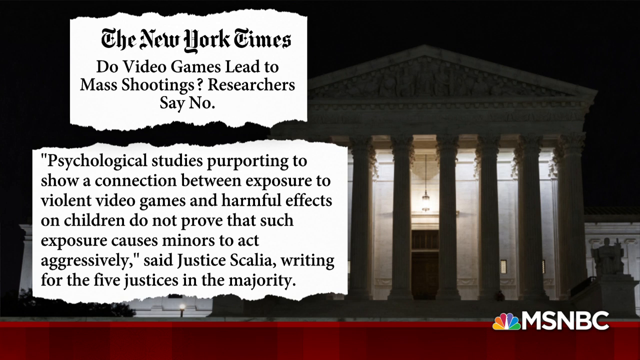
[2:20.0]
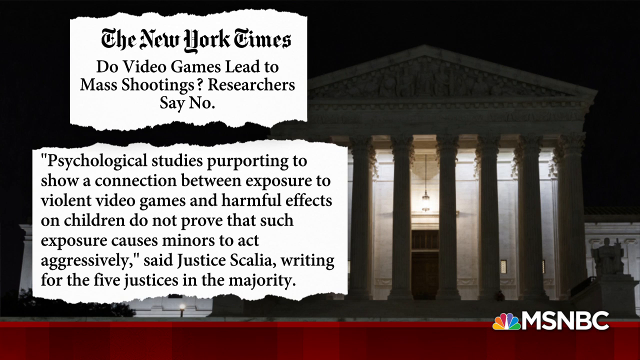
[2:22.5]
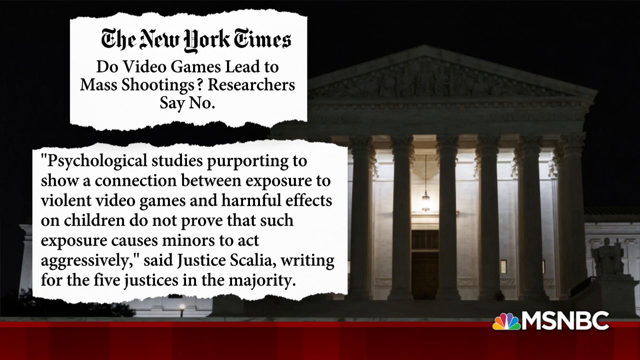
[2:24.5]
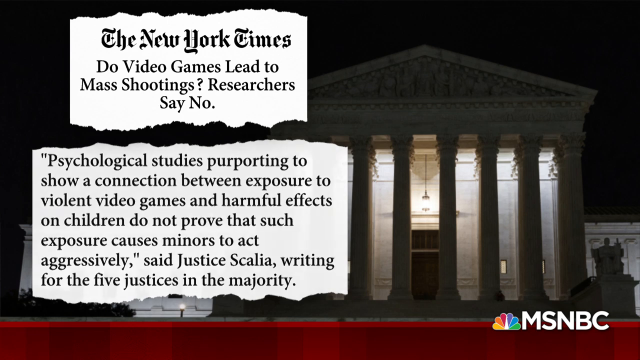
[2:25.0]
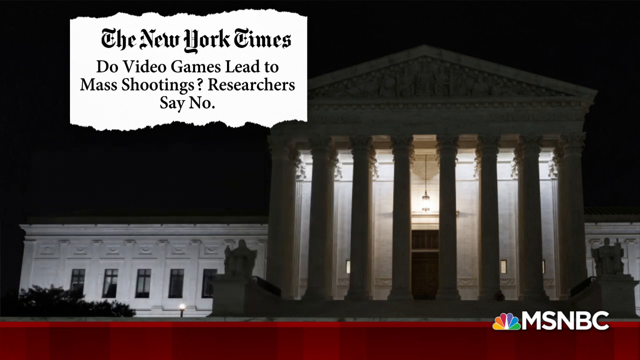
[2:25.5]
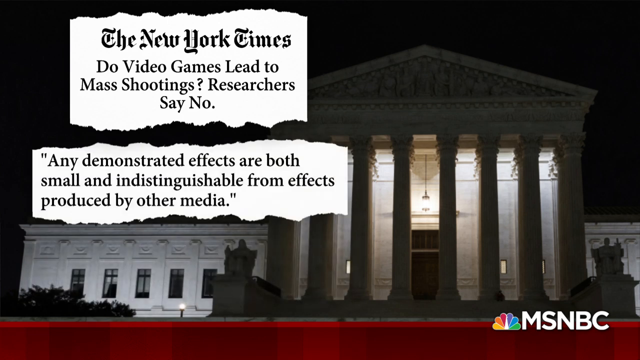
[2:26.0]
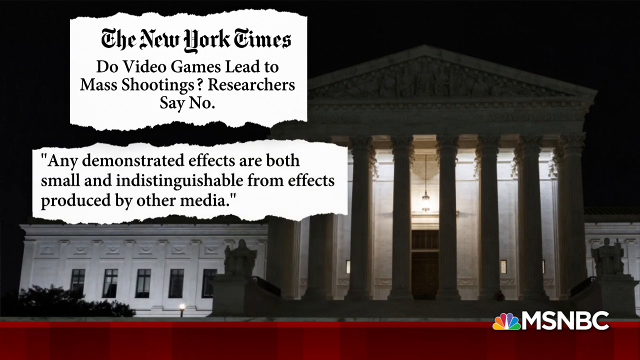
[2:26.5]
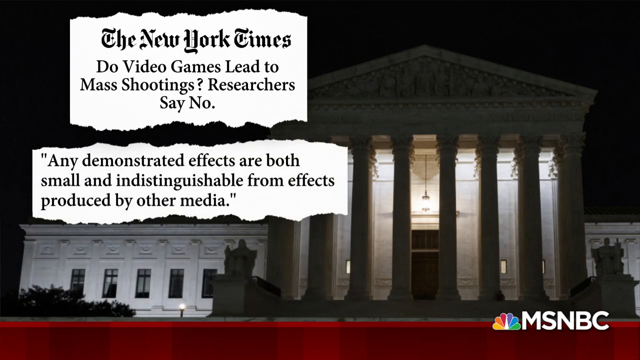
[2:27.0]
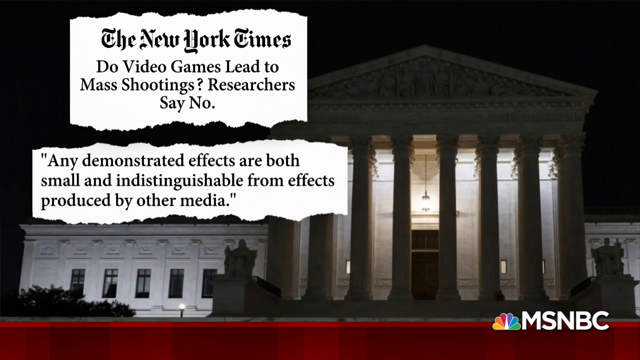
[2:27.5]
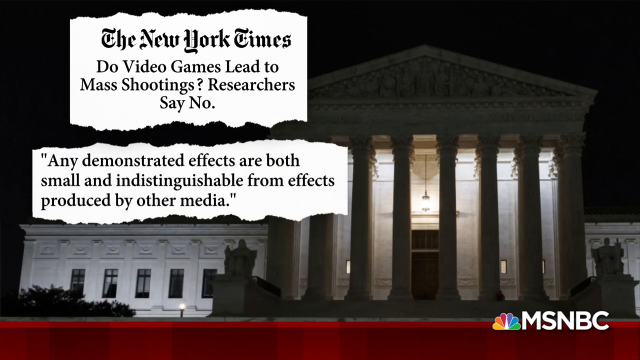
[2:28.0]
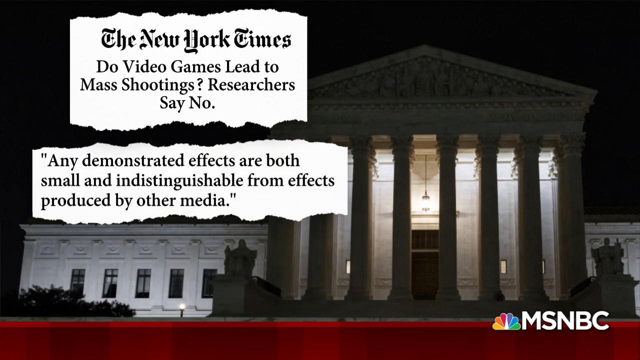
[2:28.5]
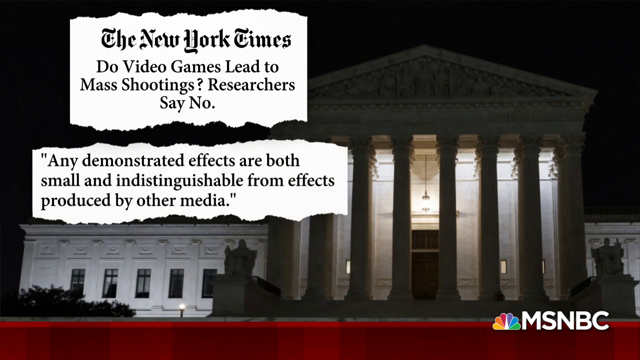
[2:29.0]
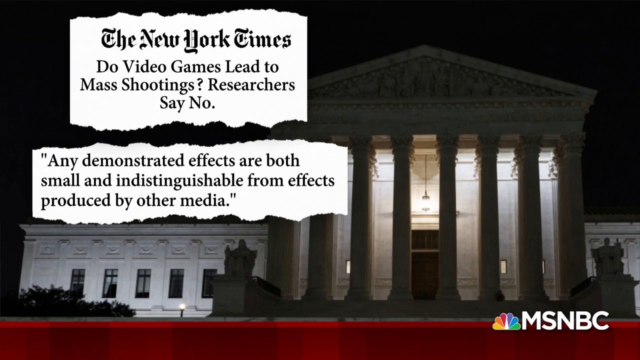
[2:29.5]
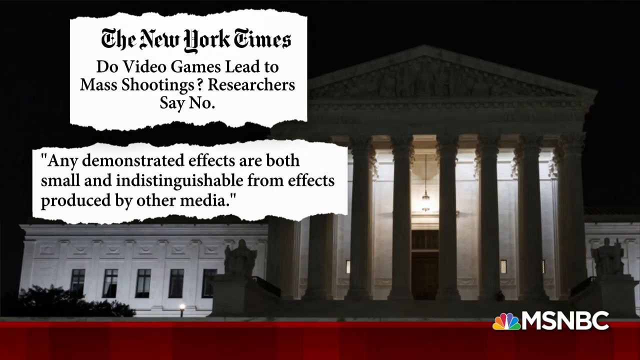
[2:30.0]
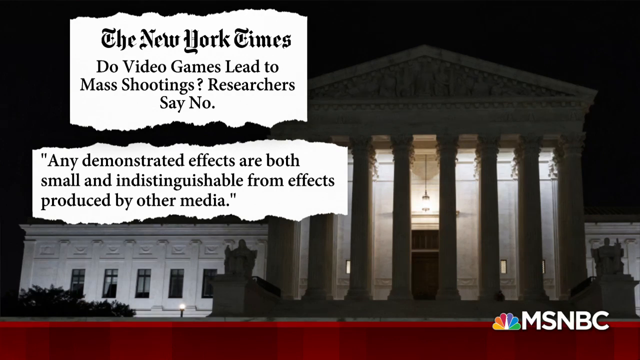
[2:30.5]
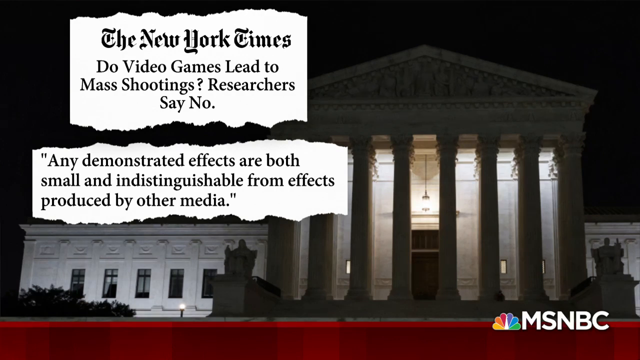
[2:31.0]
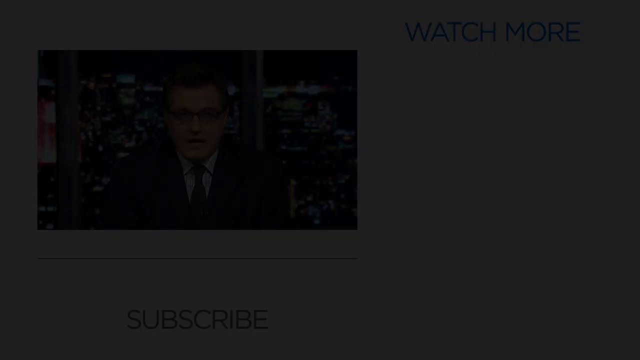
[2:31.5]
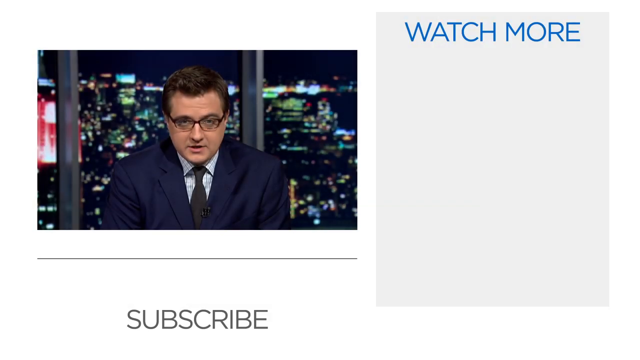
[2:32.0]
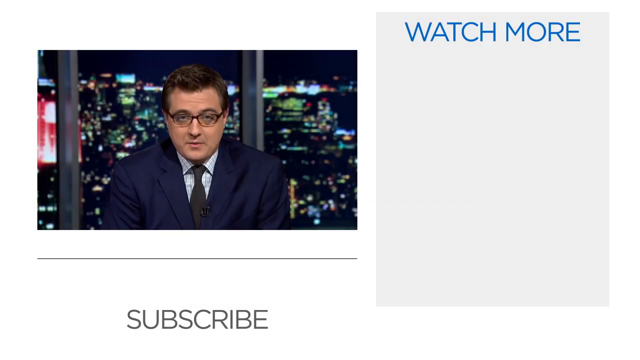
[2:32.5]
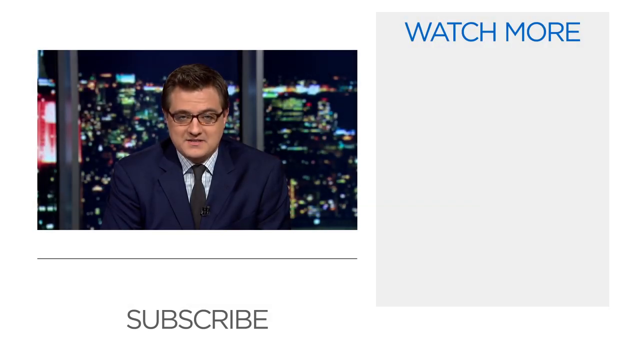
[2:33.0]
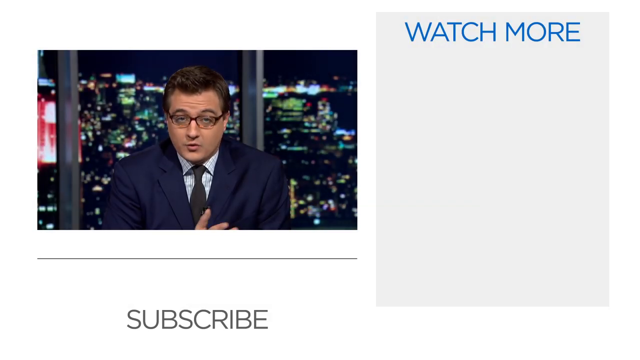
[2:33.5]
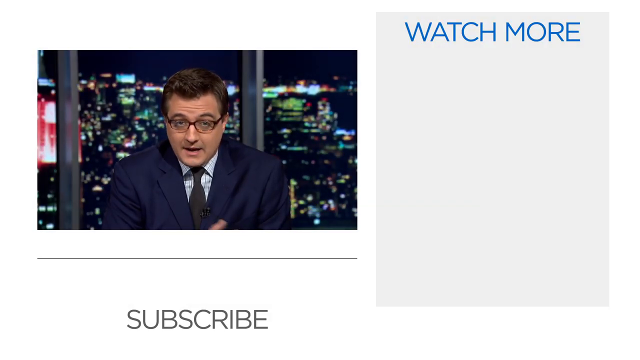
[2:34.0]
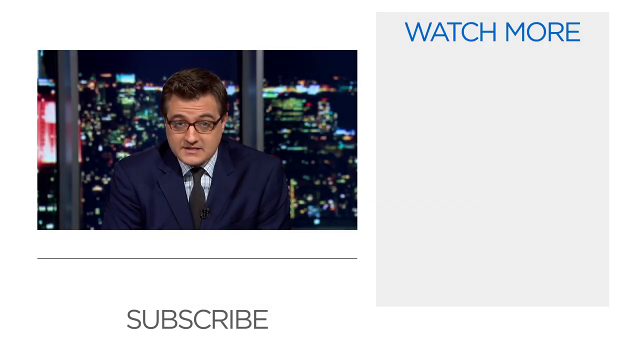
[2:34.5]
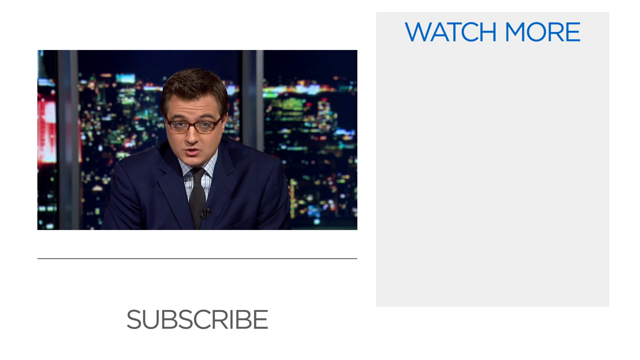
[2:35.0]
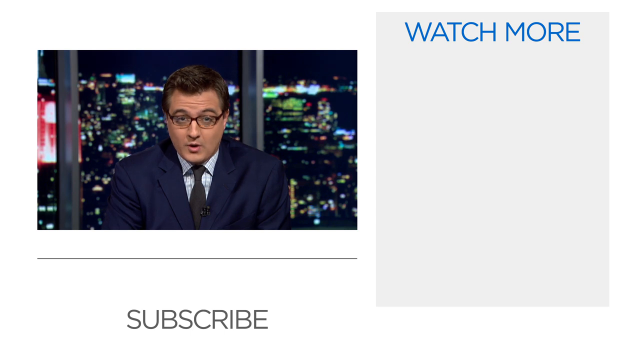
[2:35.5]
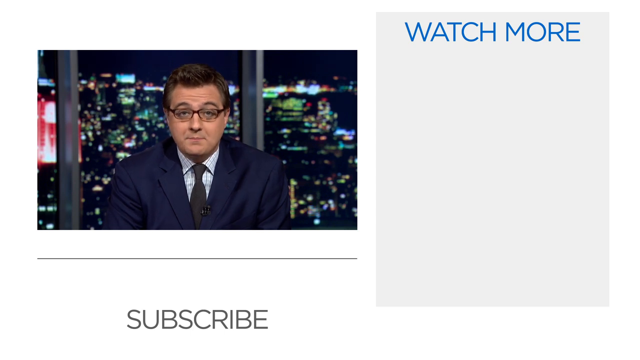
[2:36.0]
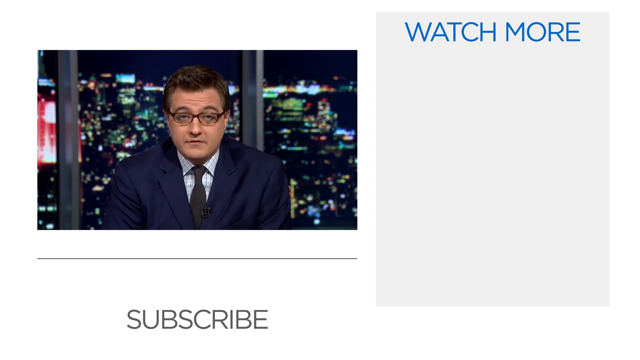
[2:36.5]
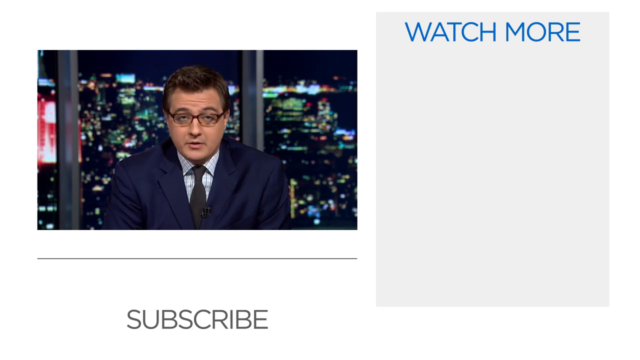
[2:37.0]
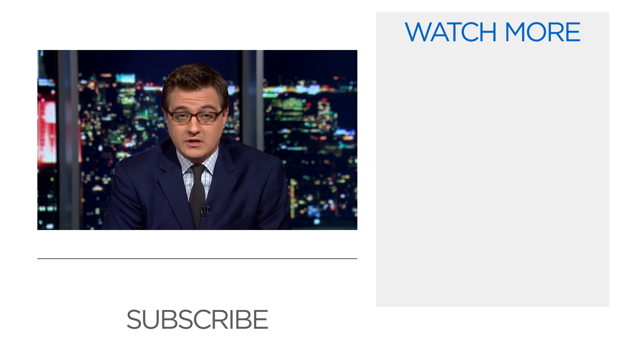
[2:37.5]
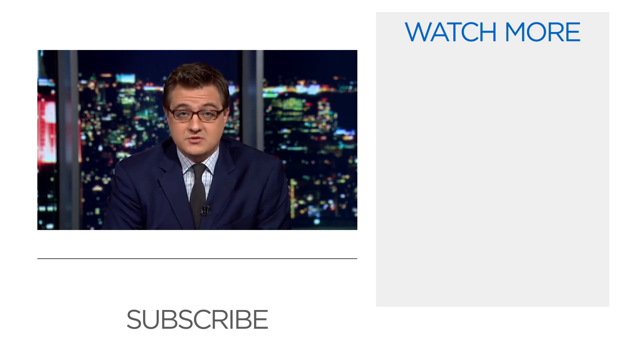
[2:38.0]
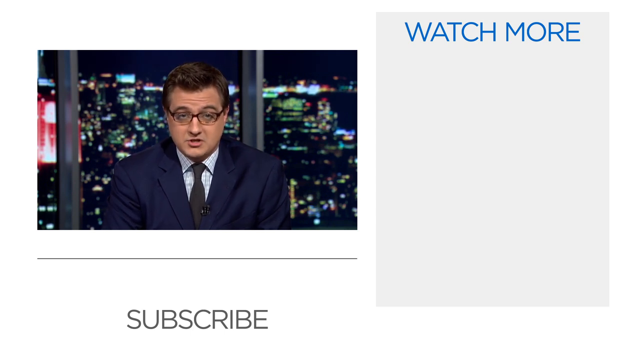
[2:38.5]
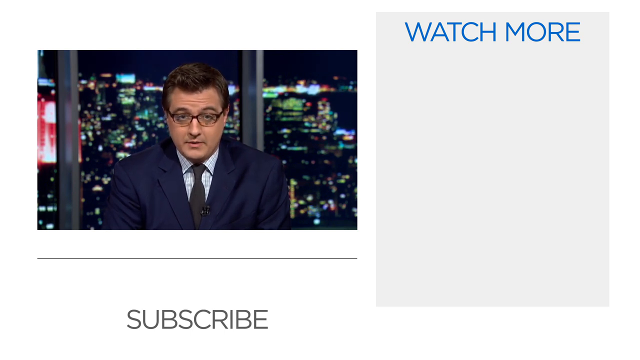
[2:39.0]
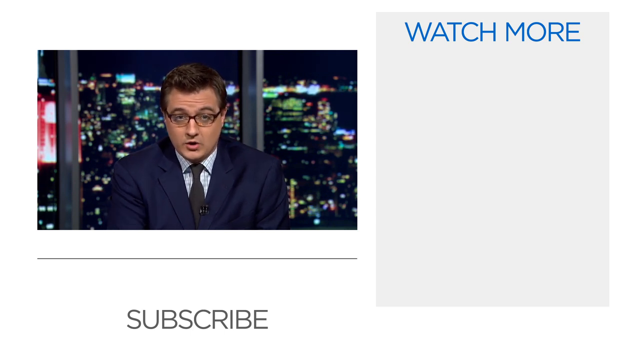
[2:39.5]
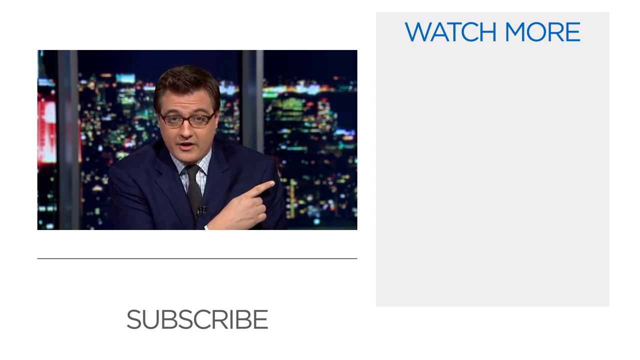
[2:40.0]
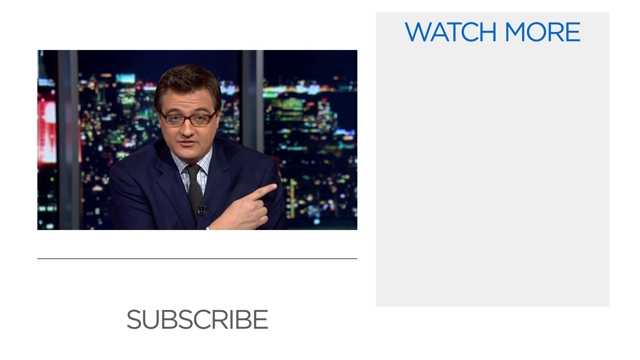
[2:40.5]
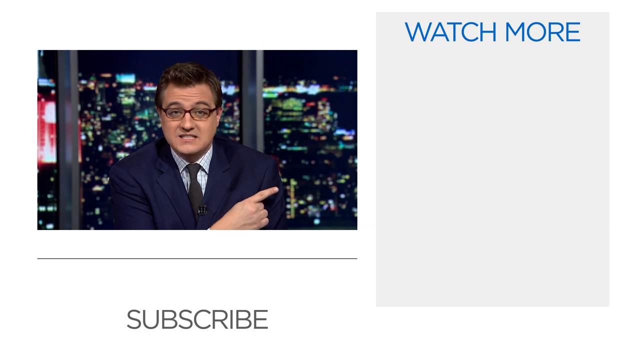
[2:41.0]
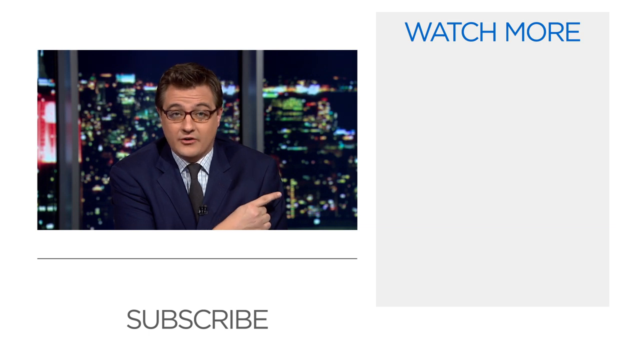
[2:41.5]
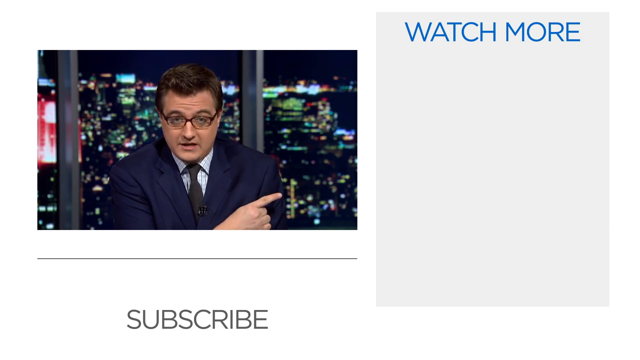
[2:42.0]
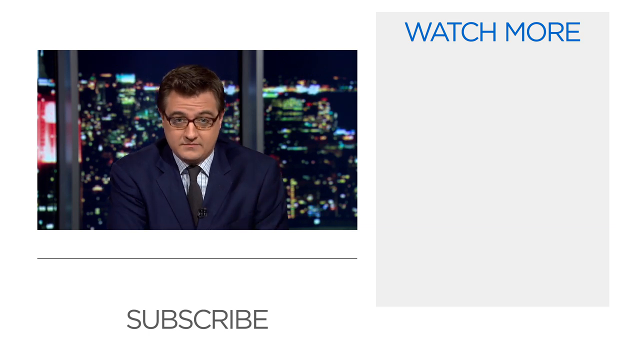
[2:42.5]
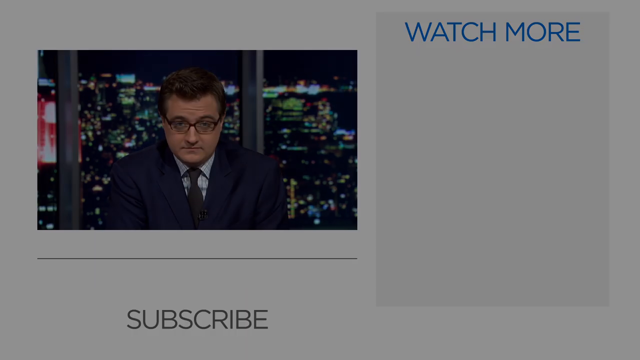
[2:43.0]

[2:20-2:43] The text asks whether video games lead to mass shootings, with the answer that researchers say no, followed by text beginning "any demonstrated effect".